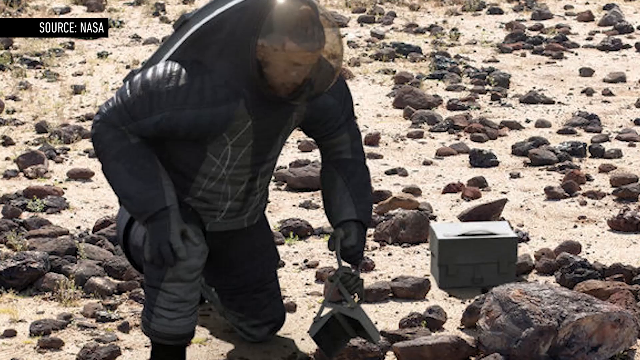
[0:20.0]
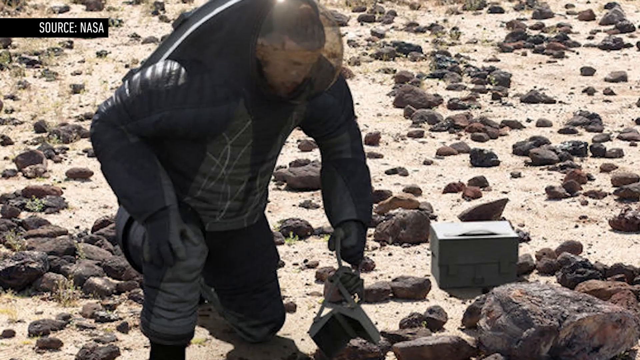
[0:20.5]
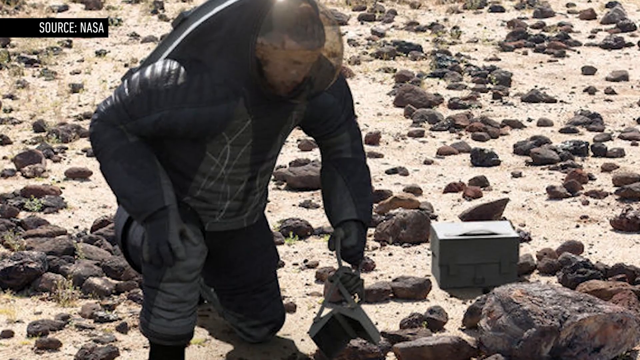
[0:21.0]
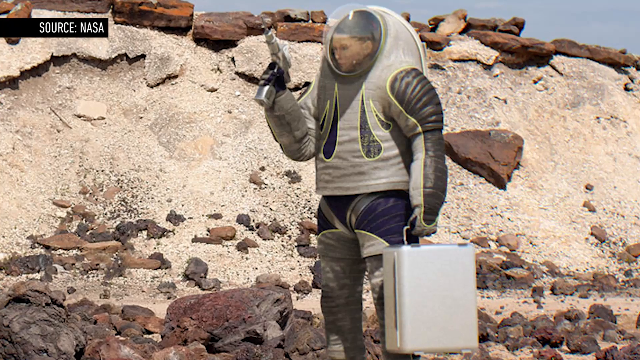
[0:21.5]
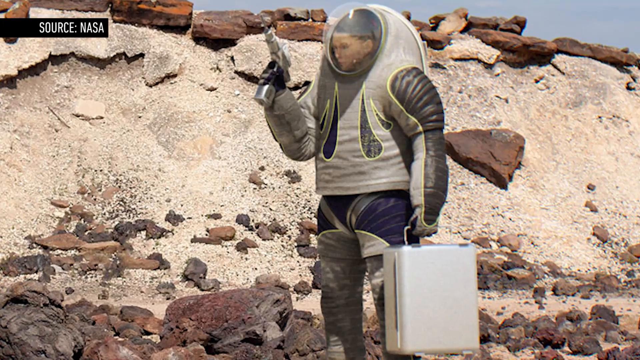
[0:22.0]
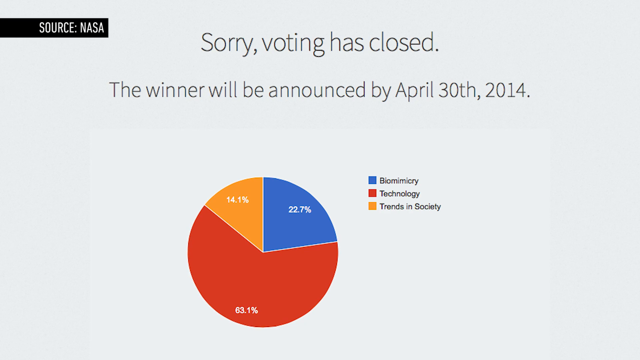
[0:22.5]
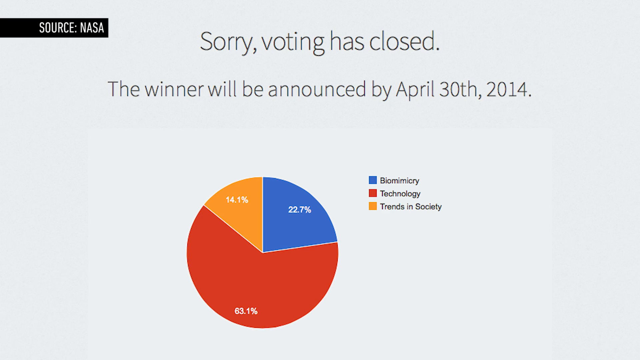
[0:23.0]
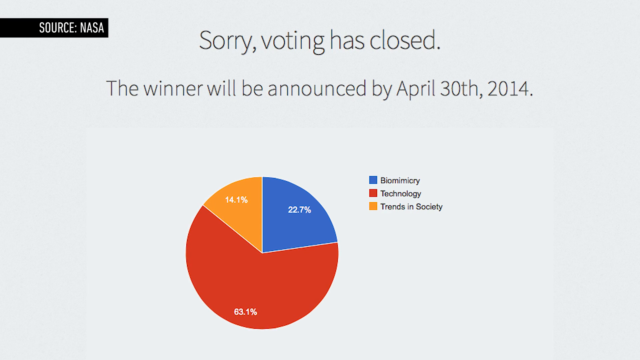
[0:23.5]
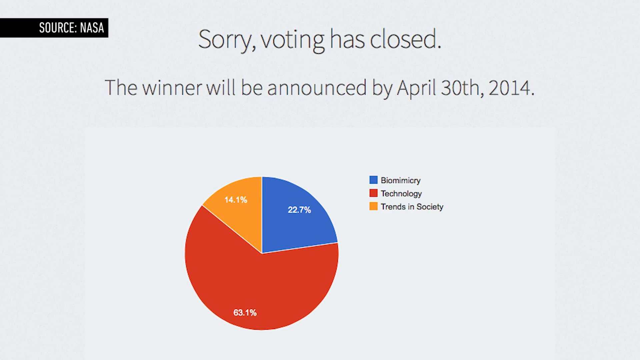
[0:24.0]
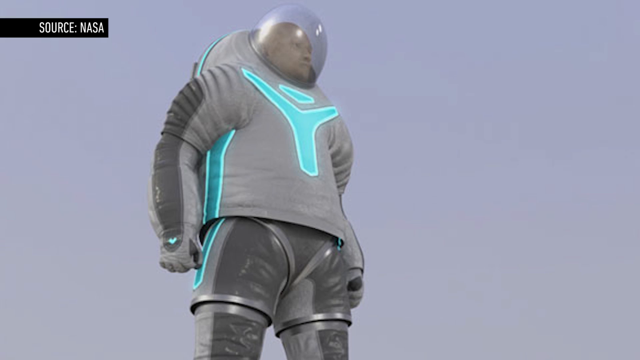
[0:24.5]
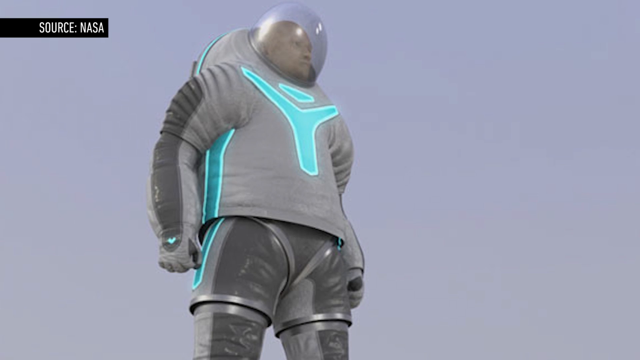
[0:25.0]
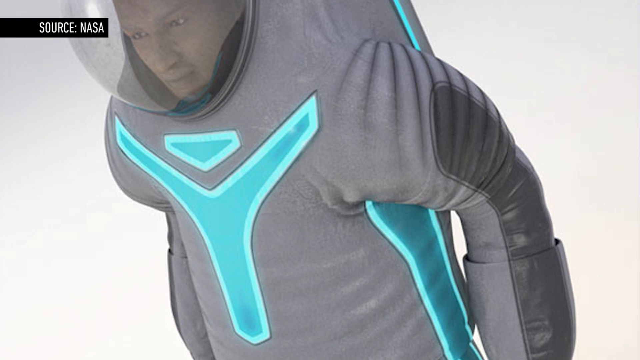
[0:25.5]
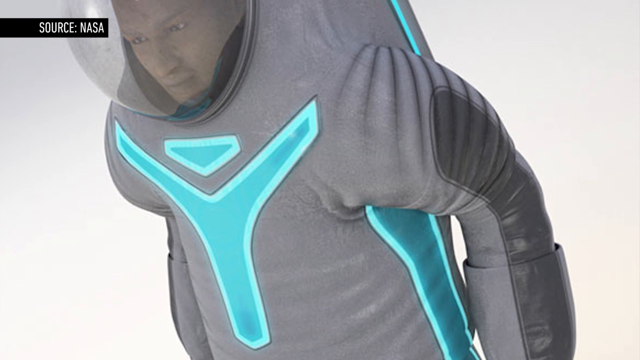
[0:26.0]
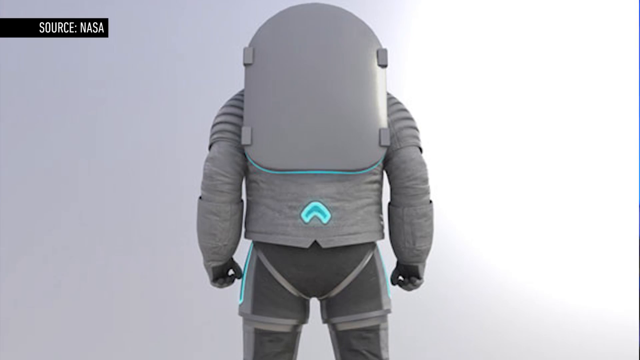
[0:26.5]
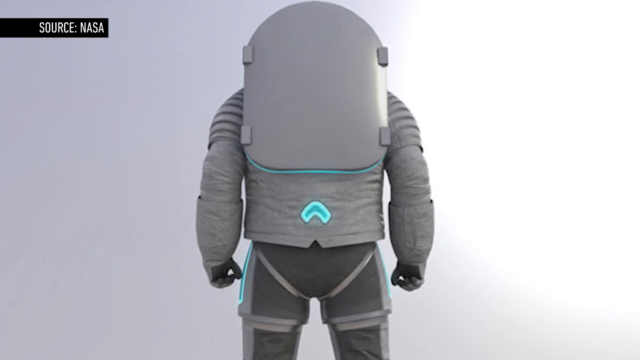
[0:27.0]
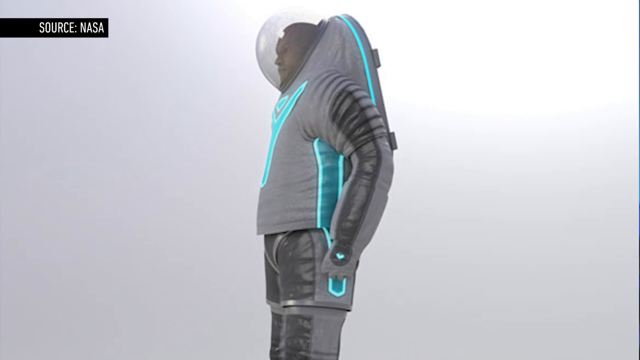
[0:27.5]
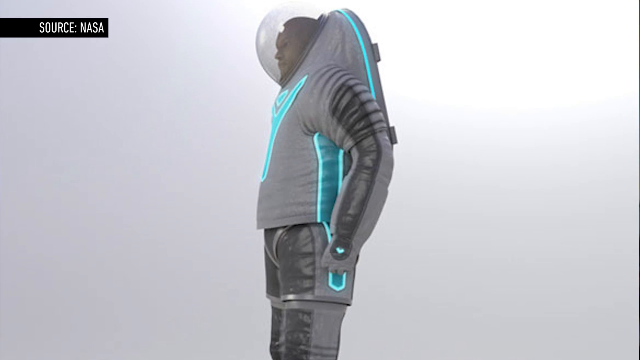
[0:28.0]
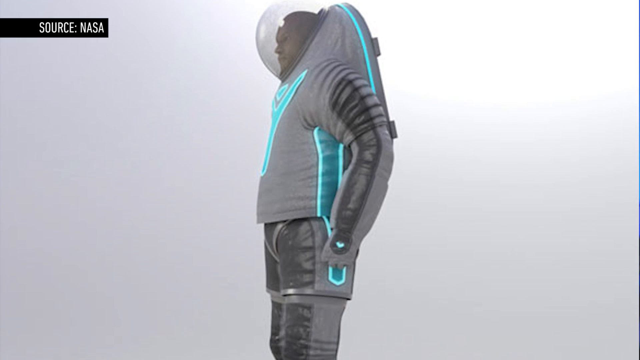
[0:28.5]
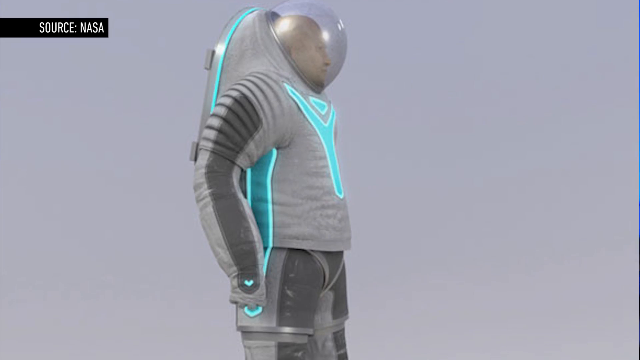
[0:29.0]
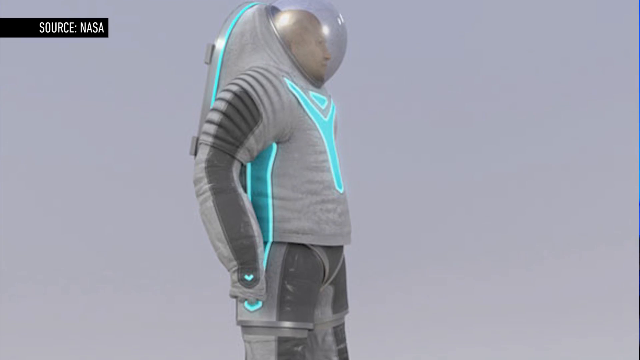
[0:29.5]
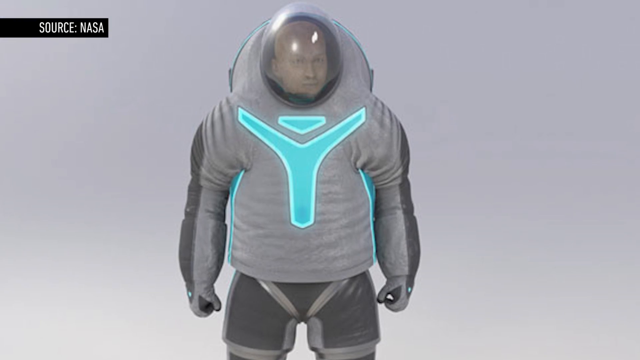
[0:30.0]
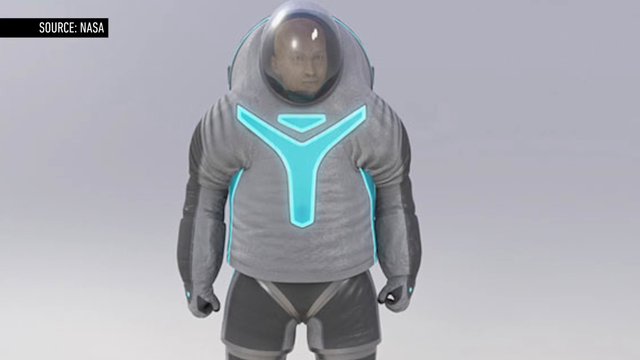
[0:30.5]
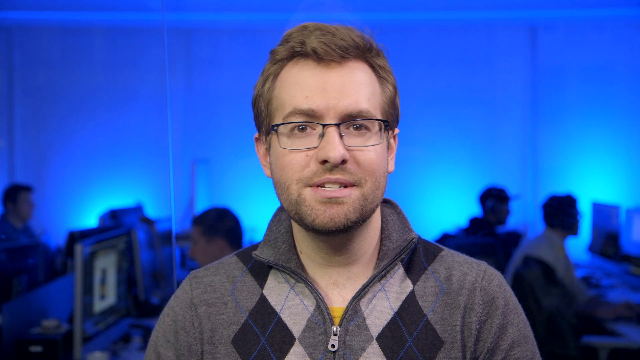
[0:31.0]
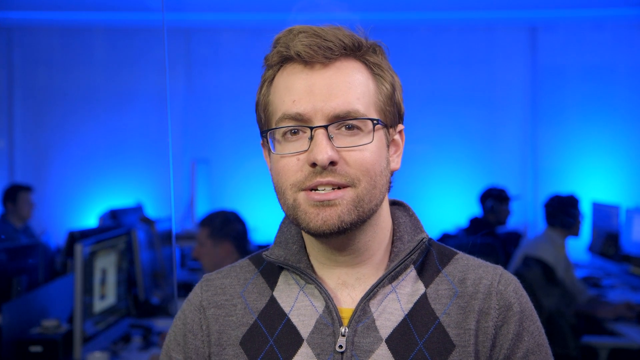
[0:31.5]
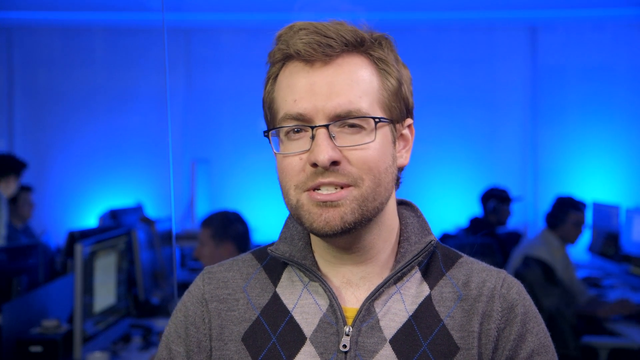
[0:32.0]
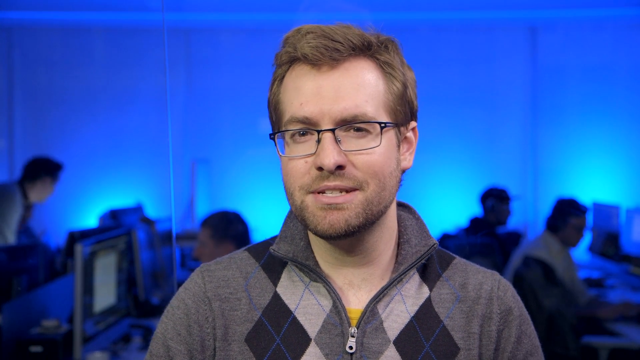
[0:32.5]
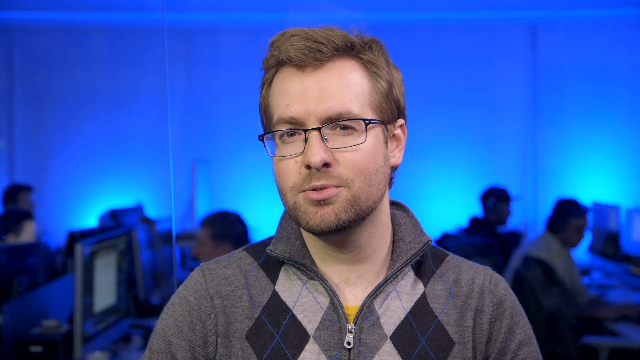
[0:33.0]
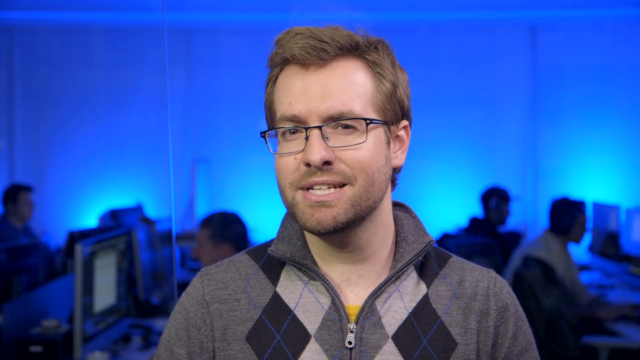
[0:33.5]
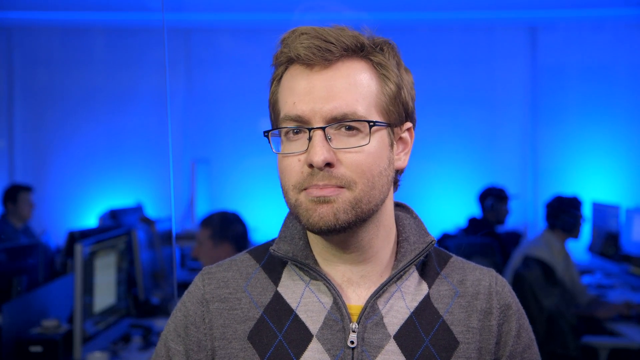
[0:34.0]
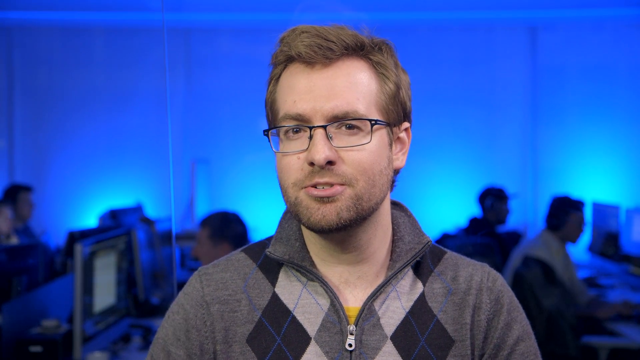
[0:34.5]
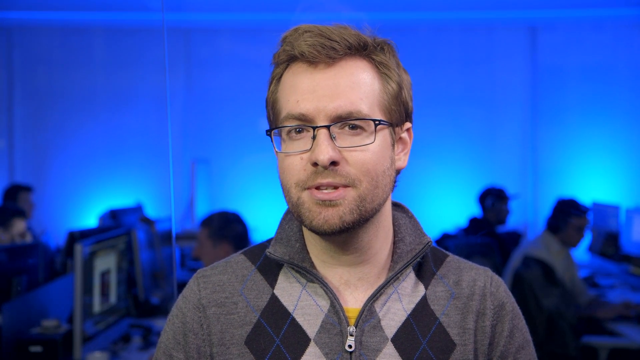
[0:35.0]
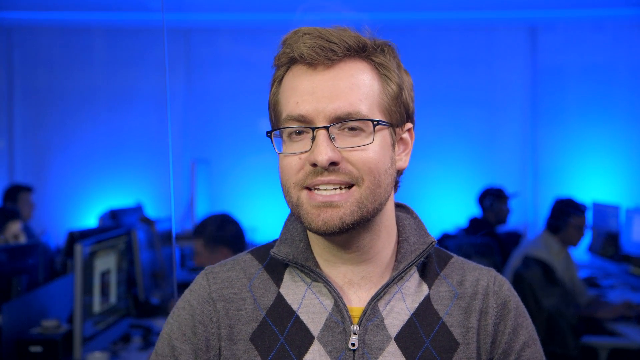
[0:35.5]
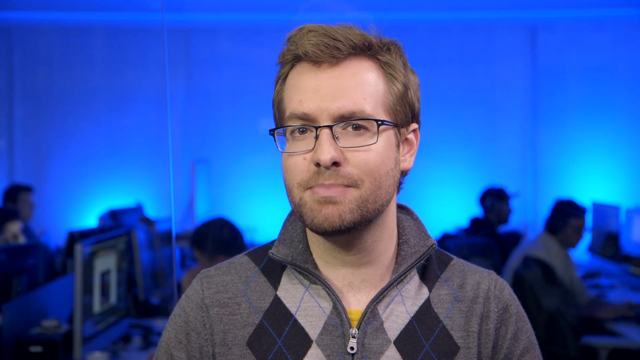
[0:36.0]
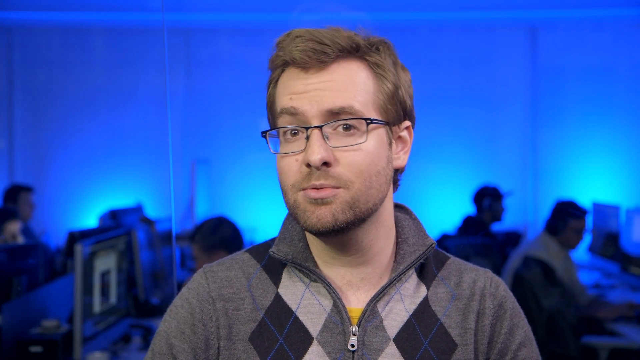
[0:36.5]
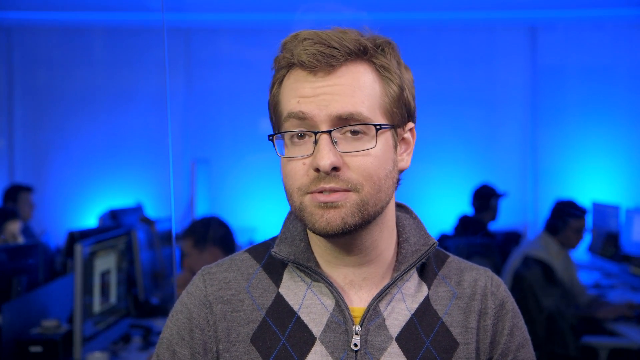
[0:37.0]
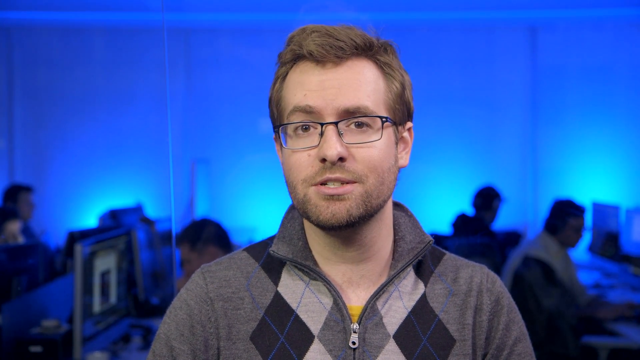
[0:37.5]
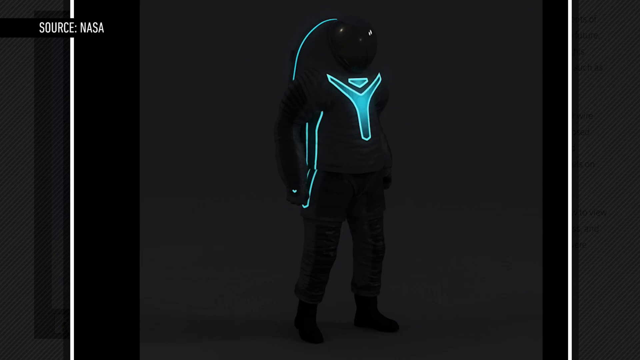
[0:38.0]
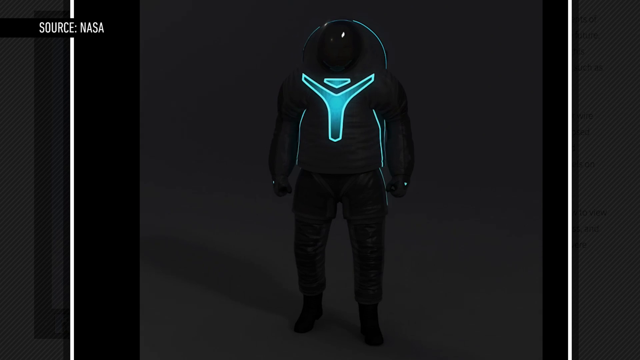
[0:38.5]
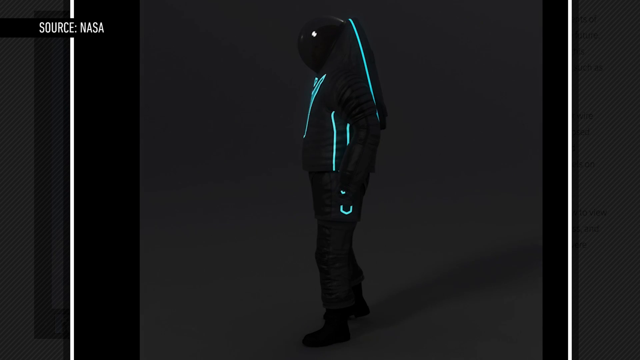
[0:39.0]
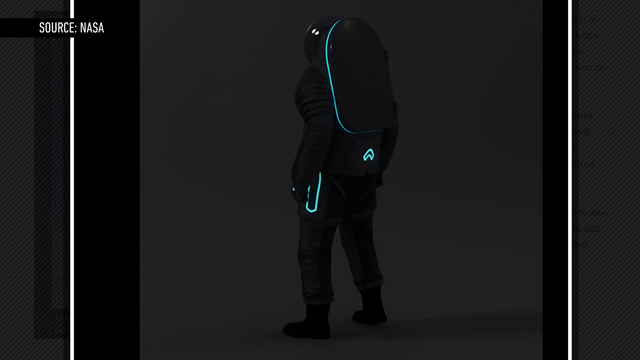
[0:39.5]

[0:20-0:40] A series of varied images shows the spacesuits in use. In the first, a man in one of the suits picks up rocks from the ground, possibly on a distant planet. A pie chart appears with a title that includes "the vote has closed, the winner will be announced on April 30, 2014." The chart has three colors: blue, labeled "biomimicry," at 22.7%; red, labeled "technology," at 63.1%; and orange, labeled "Trends in Society," at 14.1%. Several images then show the suit from different angles. The video cuts back to Miller for a second as he says something, then shows more images of the suit in the dark, revealing its sections.